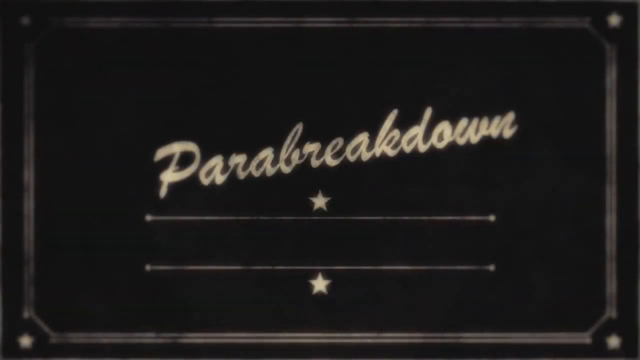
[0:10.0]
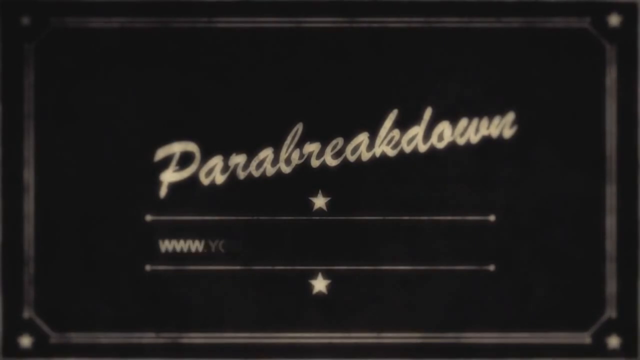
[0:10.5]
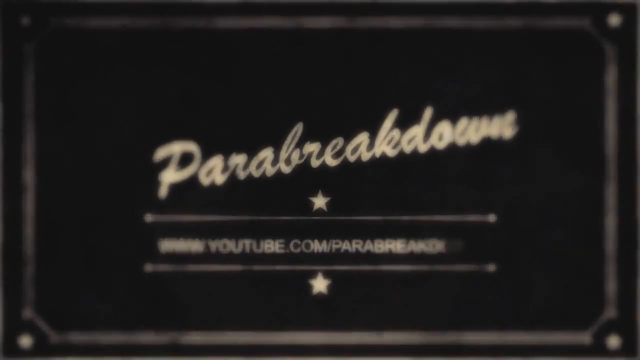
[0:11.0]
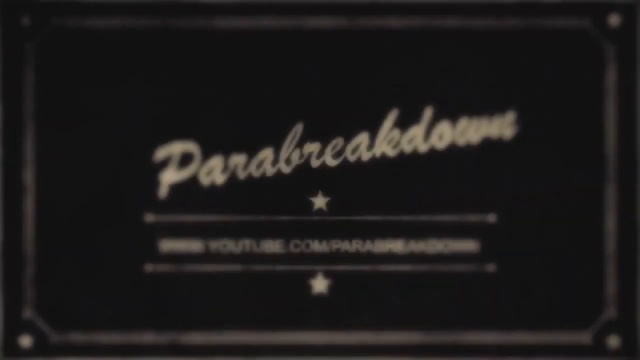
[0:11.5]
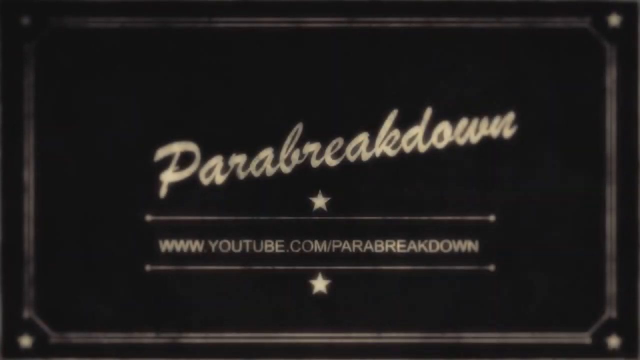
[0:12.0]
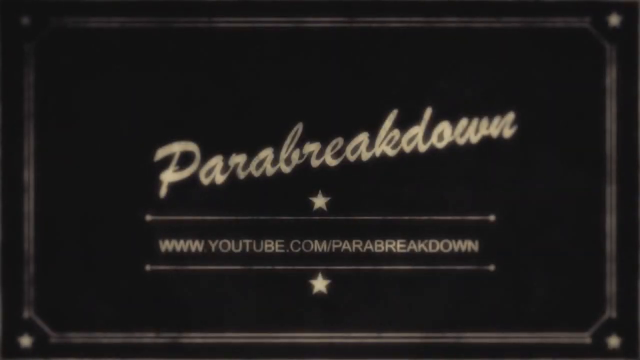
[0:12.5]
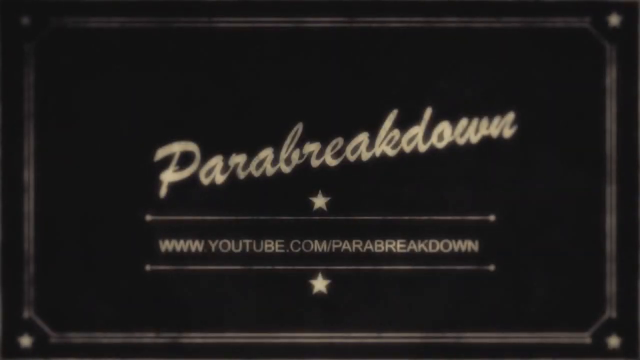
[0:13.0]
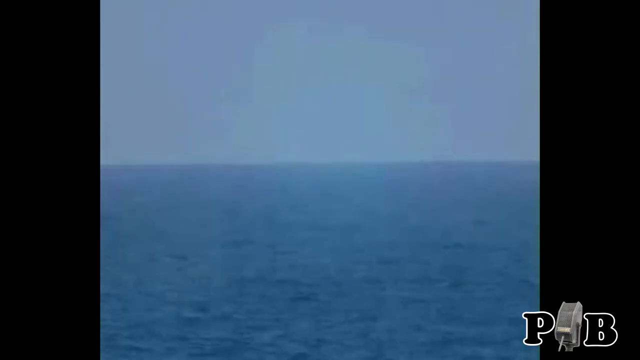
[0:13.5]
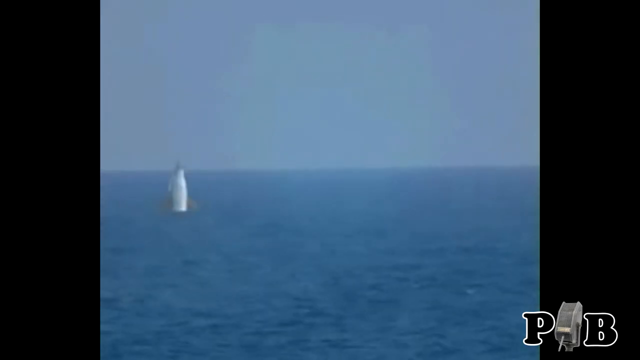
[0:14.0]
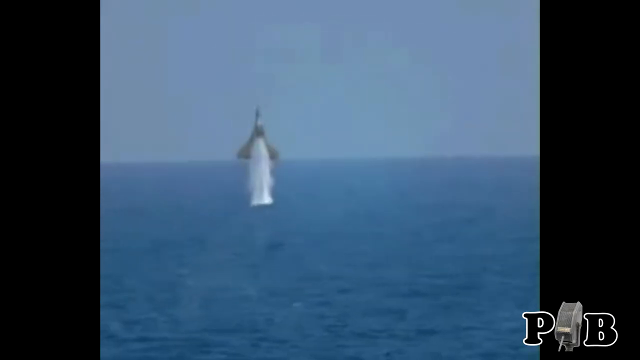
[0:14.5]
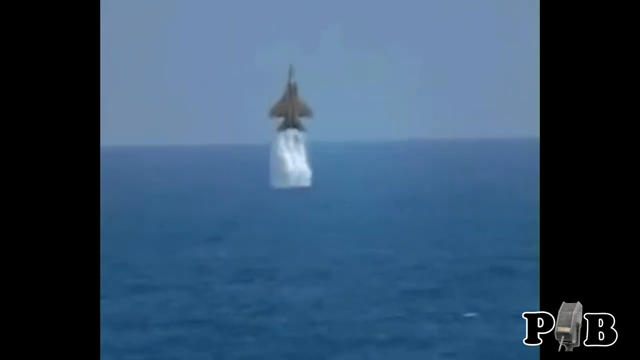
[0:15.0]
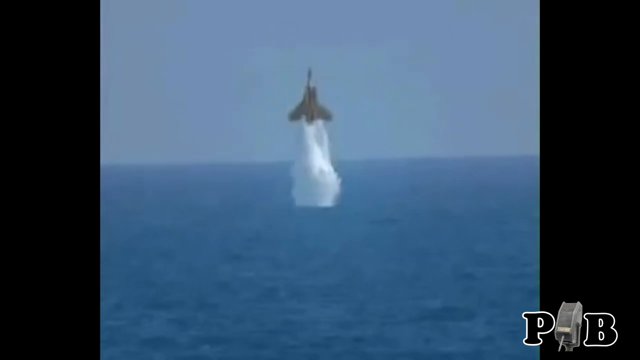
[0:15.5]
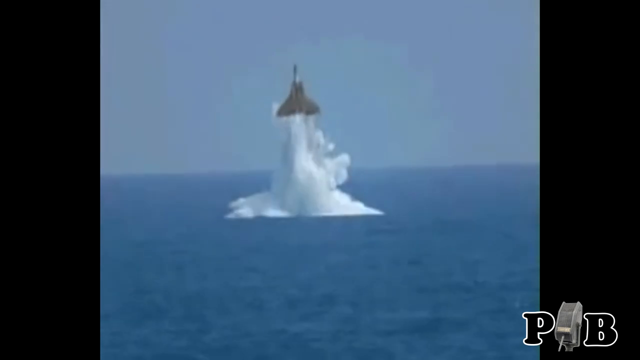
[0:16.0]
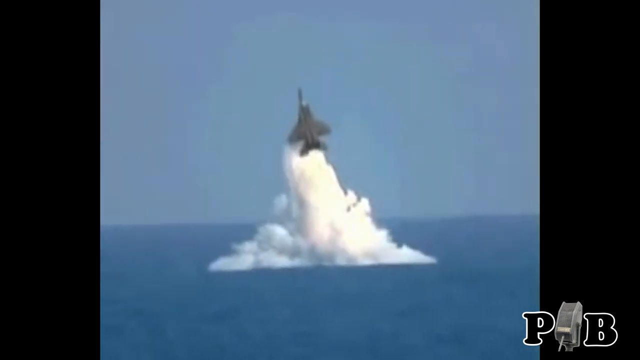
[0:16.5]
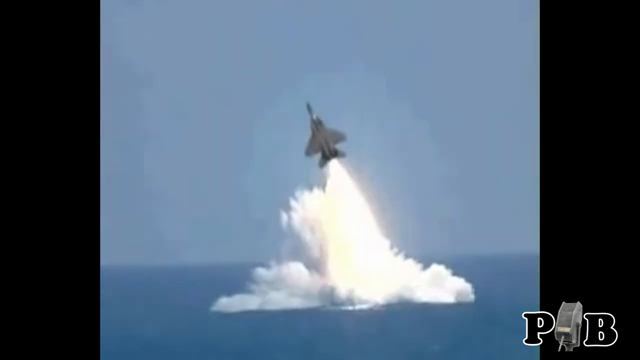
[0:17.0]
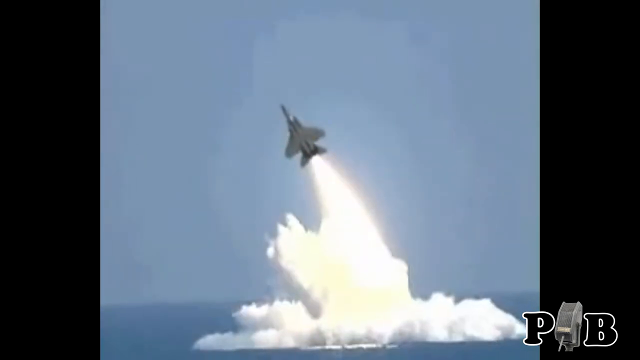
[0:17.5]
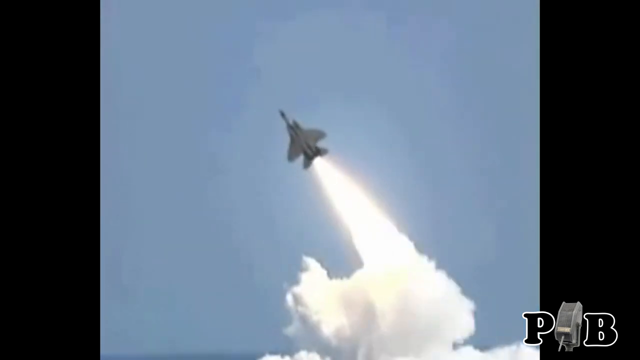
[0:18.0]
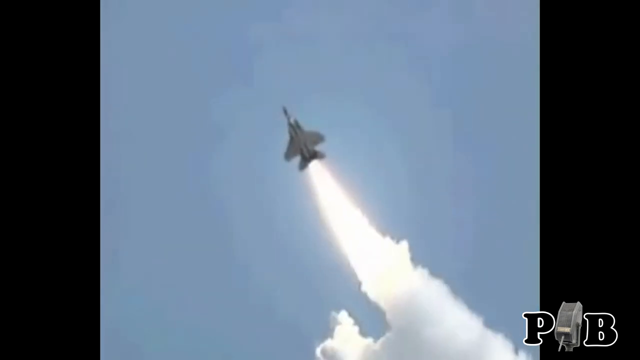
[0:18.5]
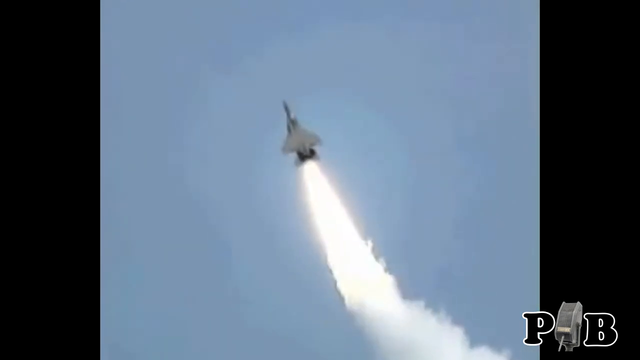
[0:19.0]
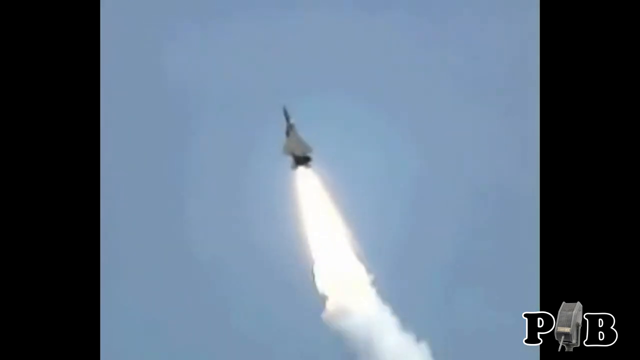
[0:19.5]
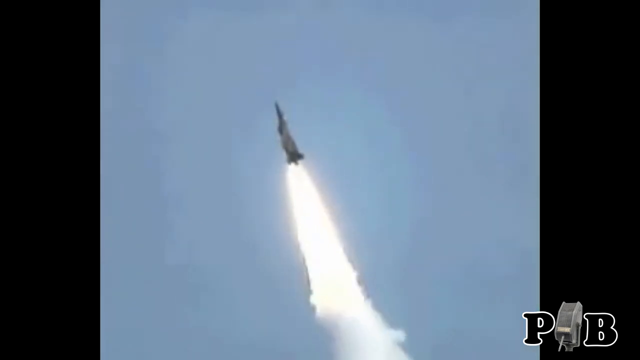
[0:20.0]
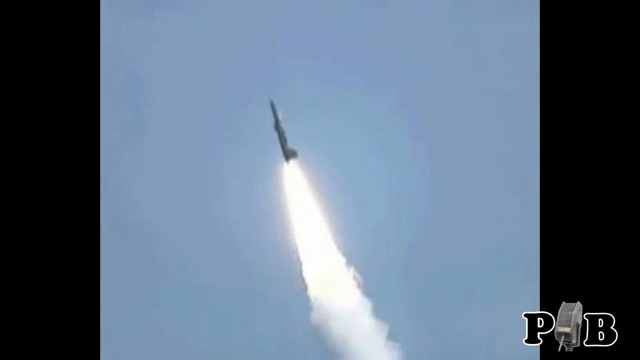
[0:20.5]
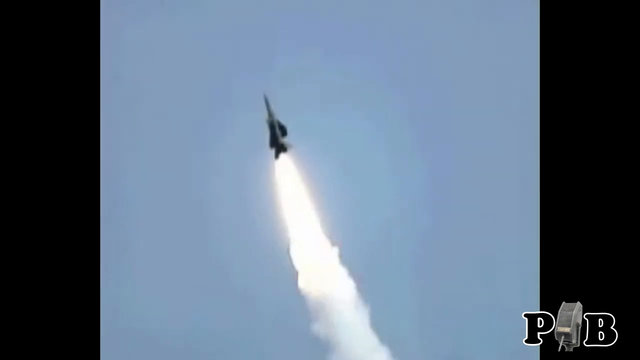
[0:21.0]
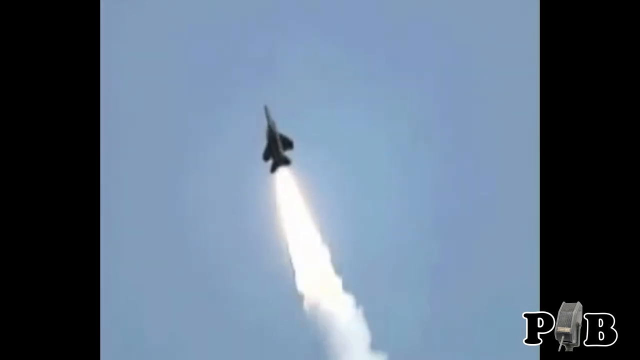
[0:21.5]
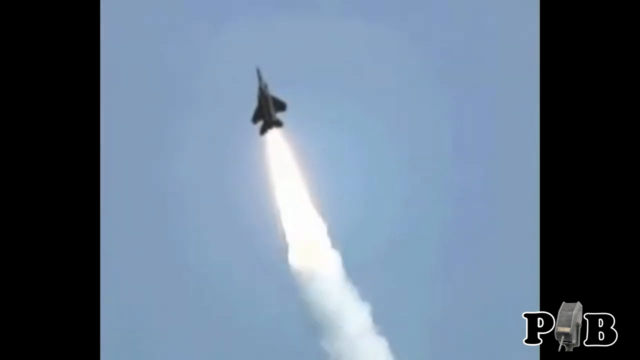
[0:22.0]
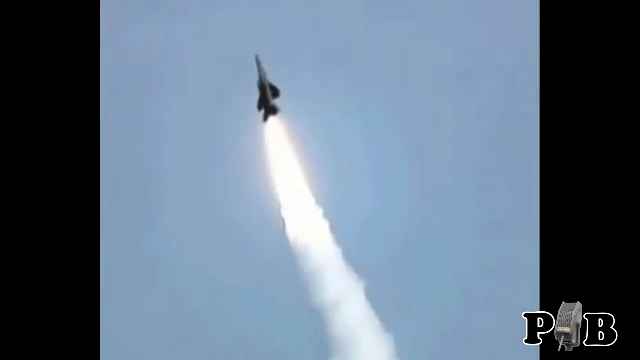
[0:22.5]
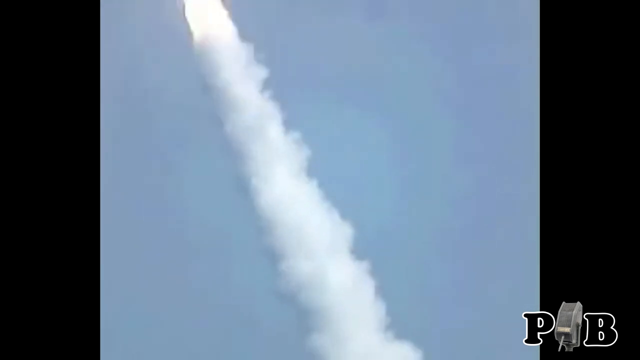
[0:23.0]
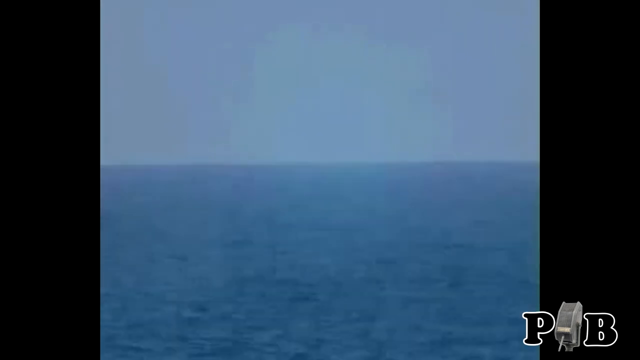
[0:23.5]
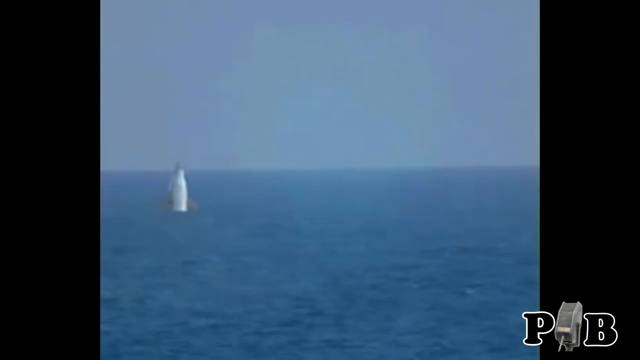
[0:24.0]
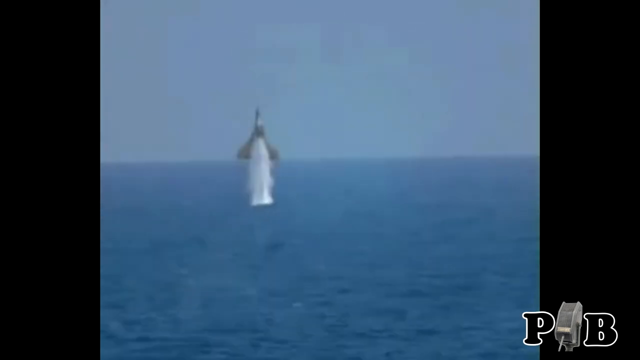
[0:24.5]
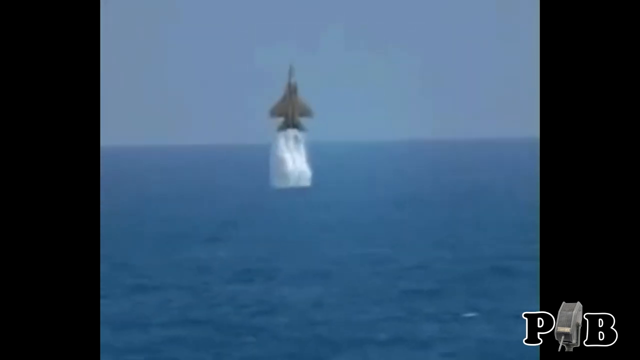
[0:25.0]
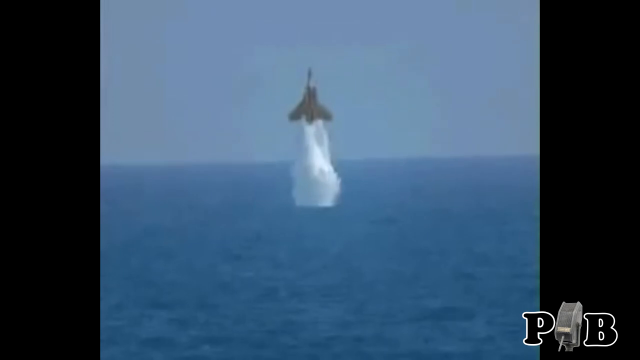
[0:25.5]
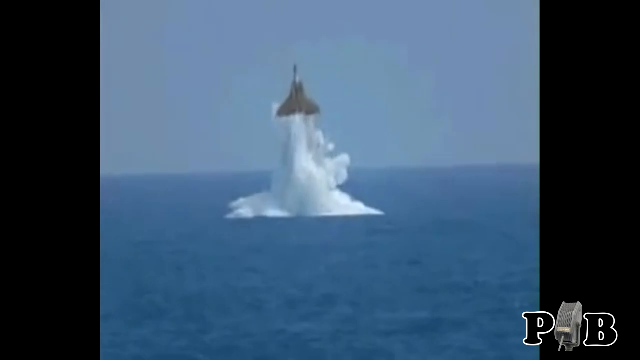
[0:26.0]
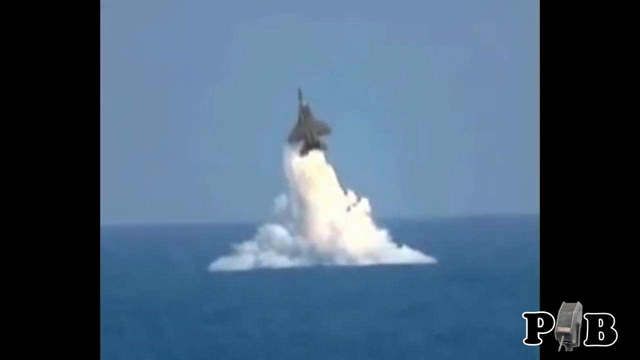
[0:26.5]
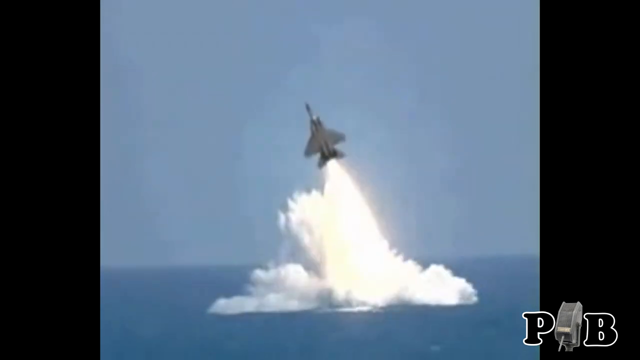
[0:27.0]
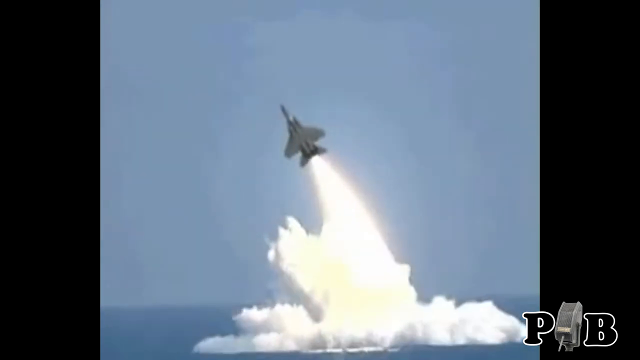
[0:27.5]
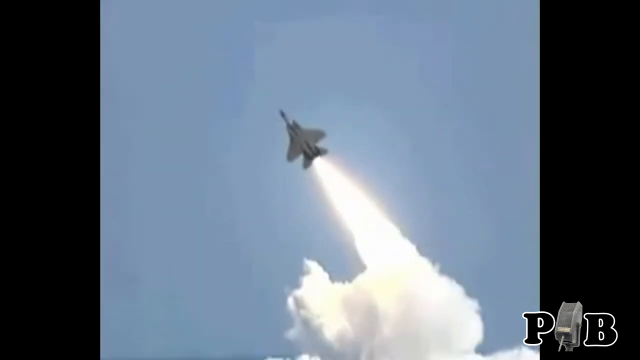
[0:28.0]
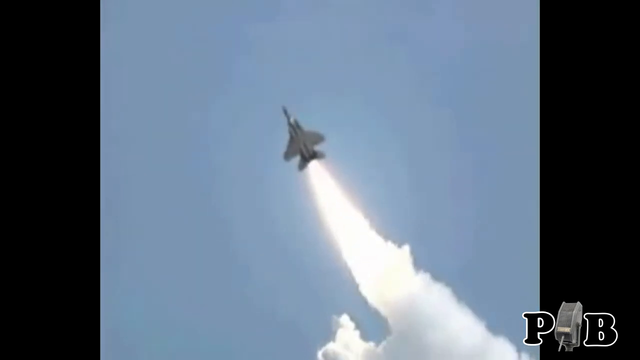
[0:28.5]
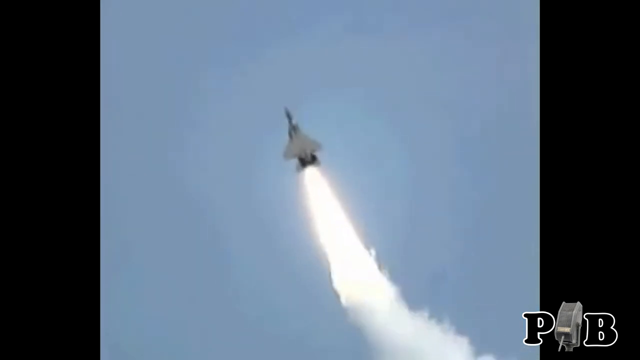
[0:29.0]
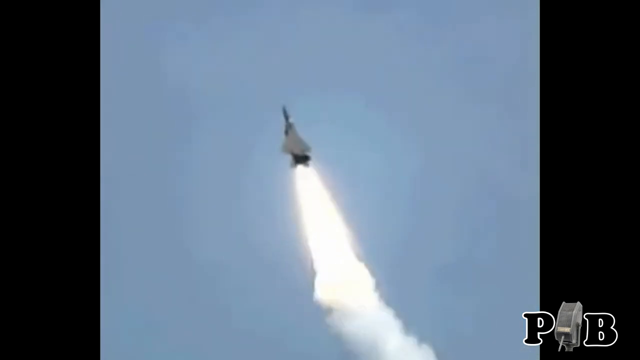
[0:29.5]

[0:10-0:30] A headline-like screen appears: whitish text on a black screen reading "YouTube para breakdown," with a star on the text and another star beneath it, resembling a frame, possibly the start of a movie. The scene then switches to a view of the sea and the horizon in different shades of blue, the sea a darker blue and the sky a lighter blue. Suddenly a fighter jet comes out of the sea, with white foam and white smoke rising from the water. The jet goes straight up into the air at 90 degrees vertically, then tilts a little to the left and turns around. Its yellowish burning fire is clearly visible as it creates more clouds, and then the view breaks away.